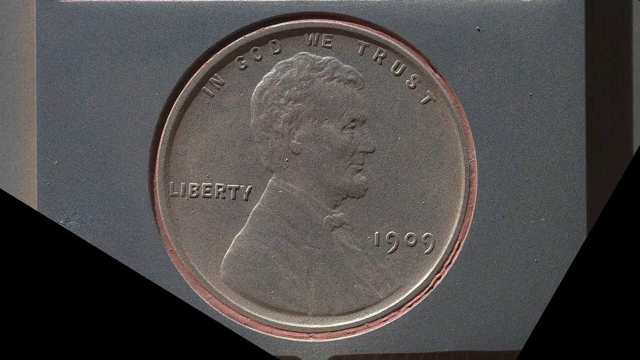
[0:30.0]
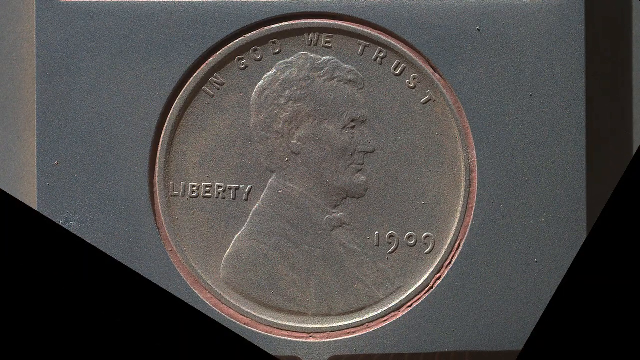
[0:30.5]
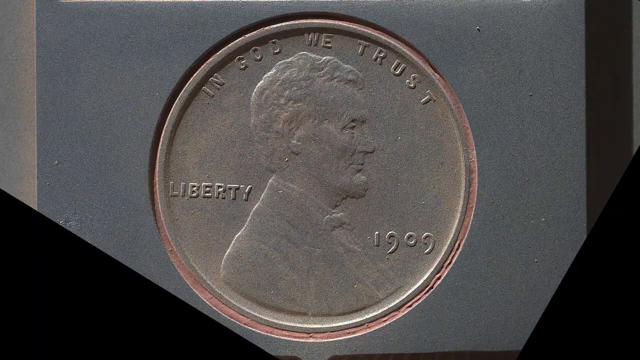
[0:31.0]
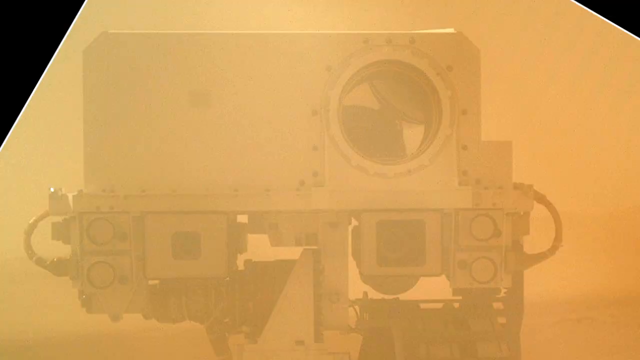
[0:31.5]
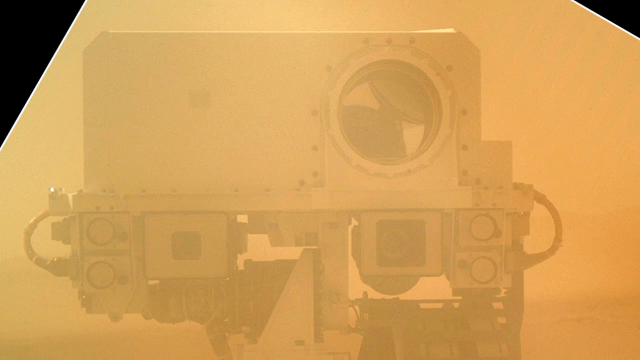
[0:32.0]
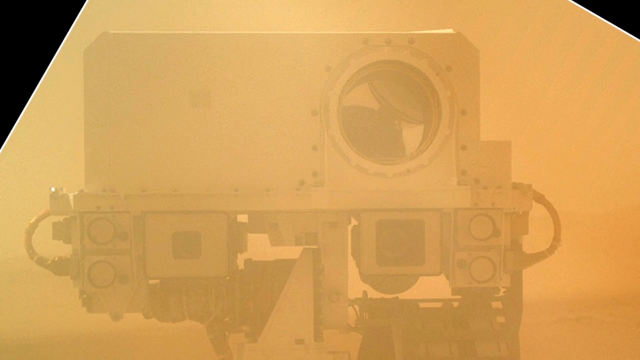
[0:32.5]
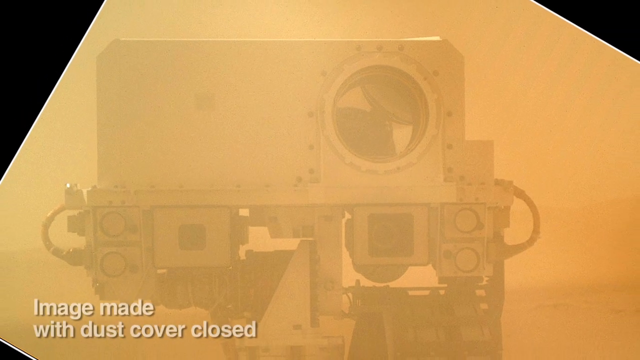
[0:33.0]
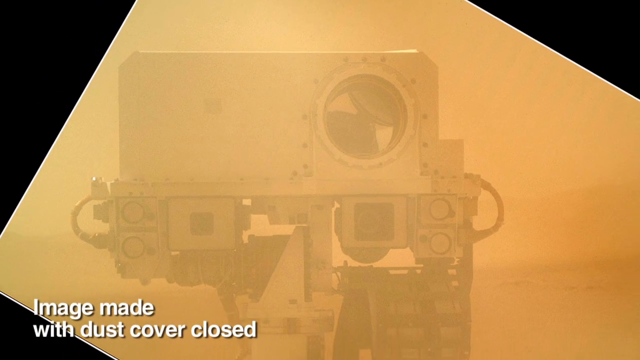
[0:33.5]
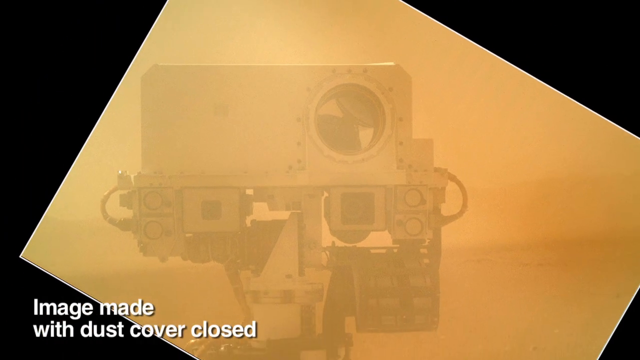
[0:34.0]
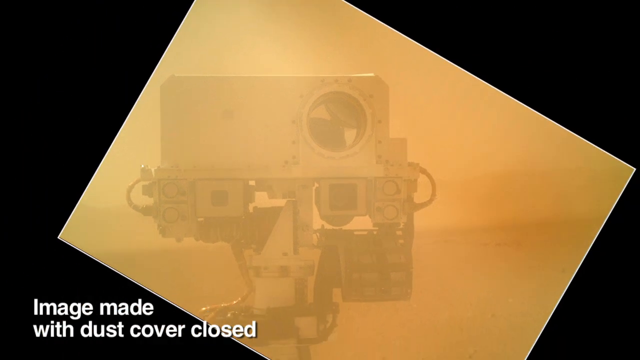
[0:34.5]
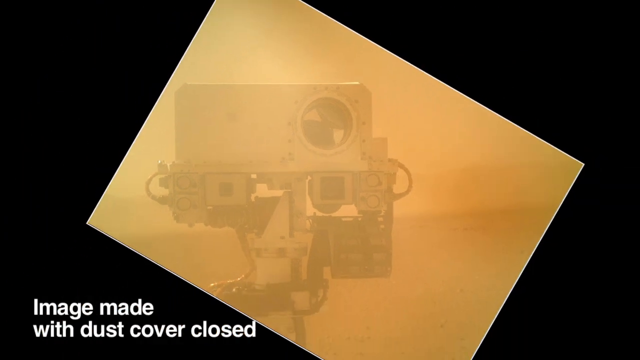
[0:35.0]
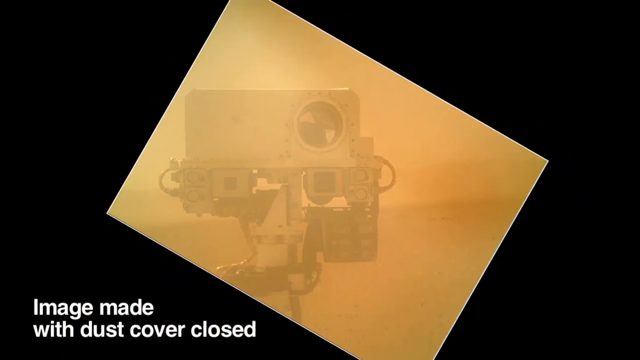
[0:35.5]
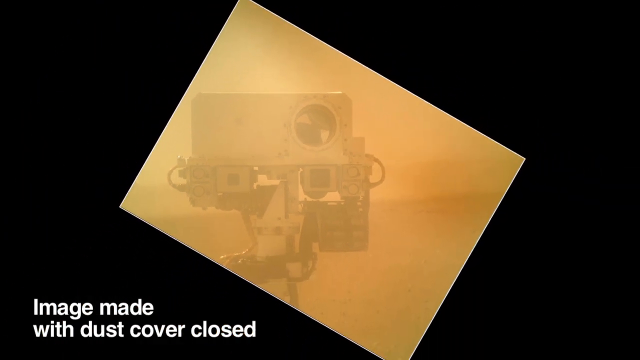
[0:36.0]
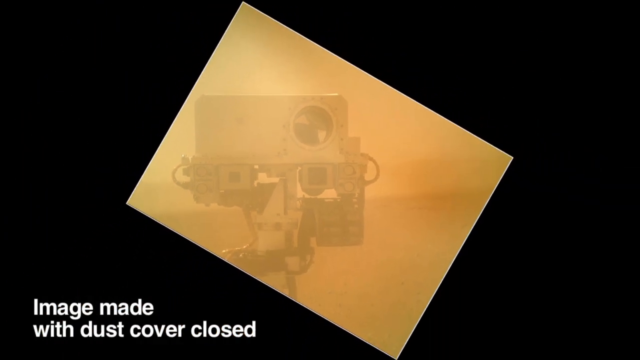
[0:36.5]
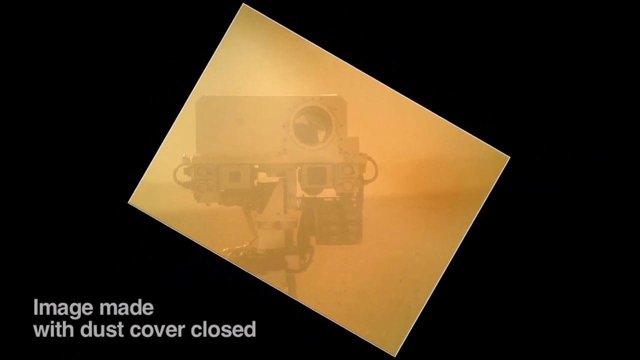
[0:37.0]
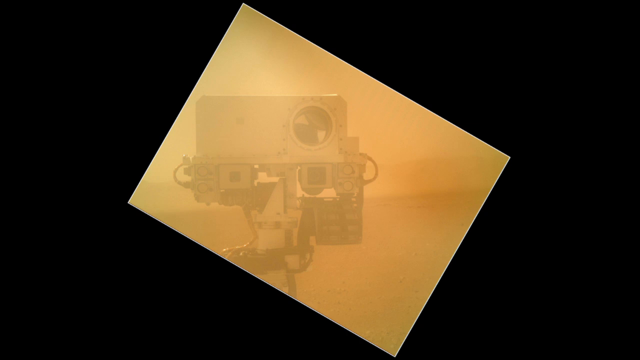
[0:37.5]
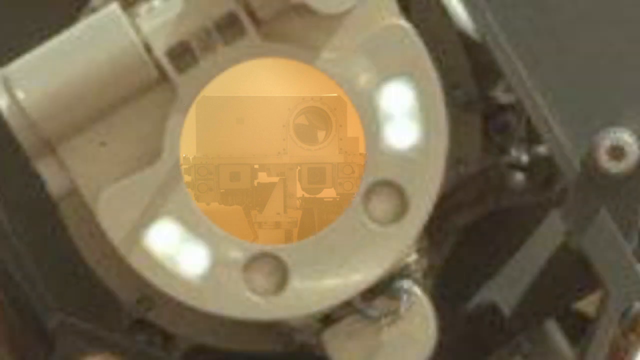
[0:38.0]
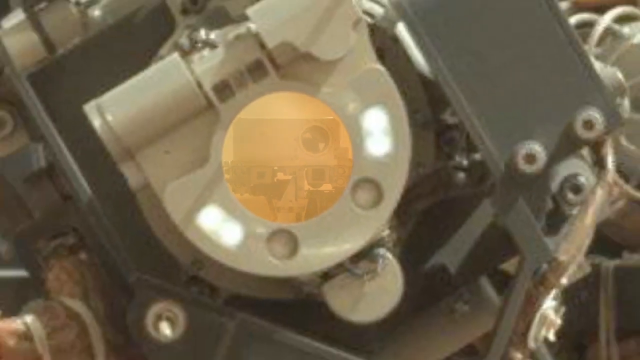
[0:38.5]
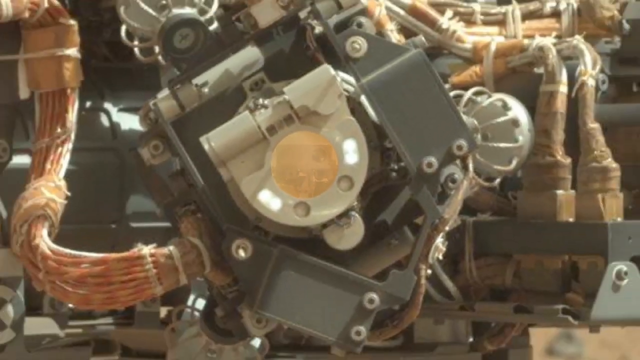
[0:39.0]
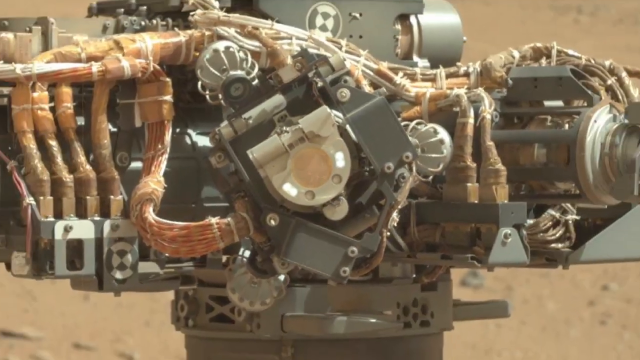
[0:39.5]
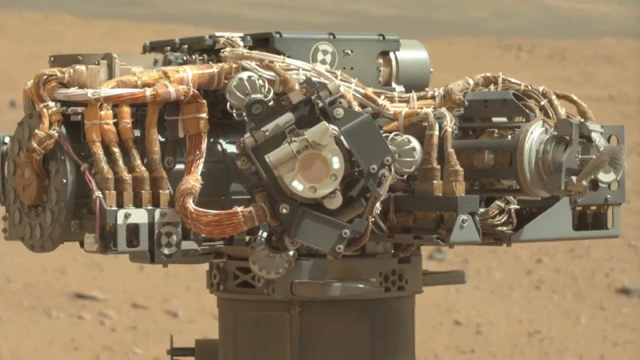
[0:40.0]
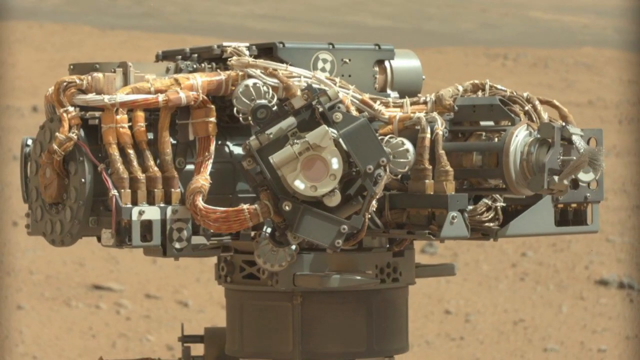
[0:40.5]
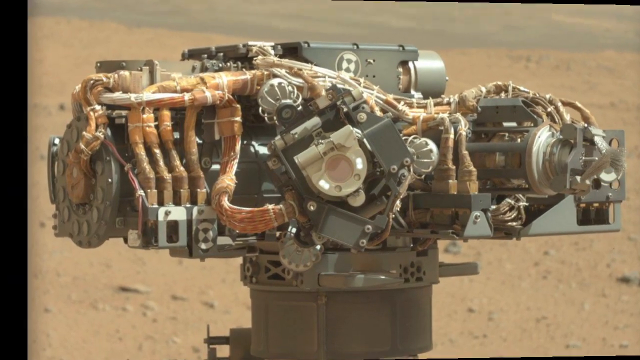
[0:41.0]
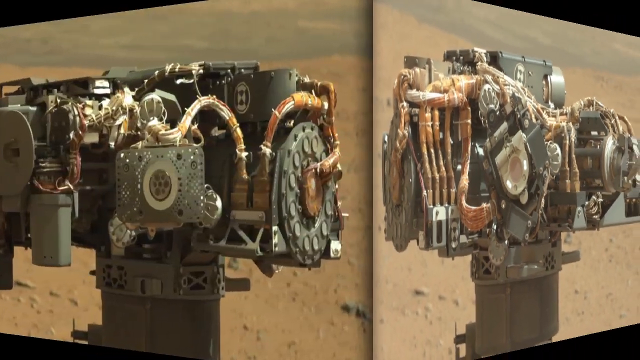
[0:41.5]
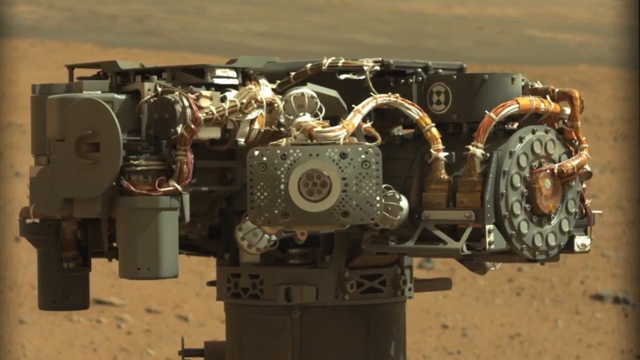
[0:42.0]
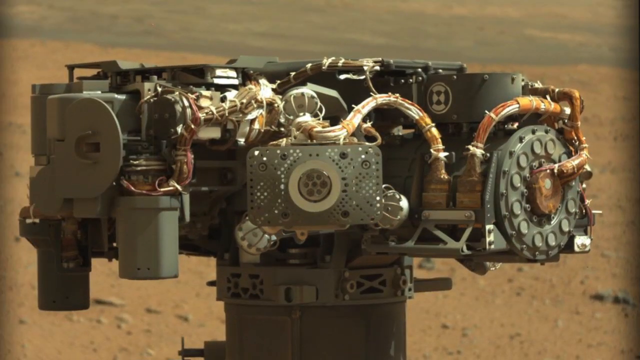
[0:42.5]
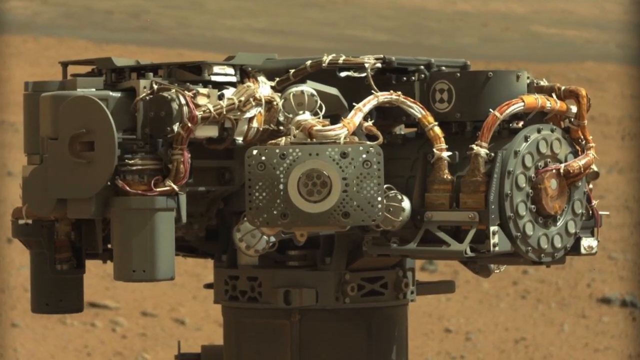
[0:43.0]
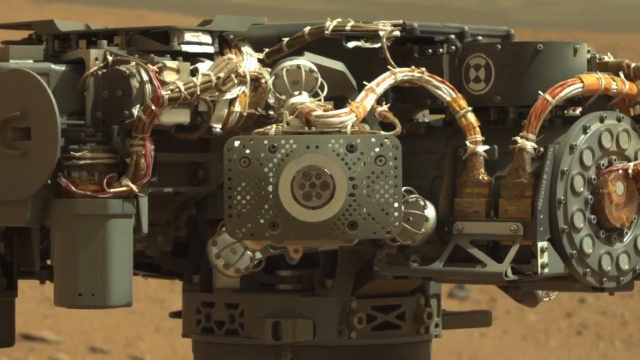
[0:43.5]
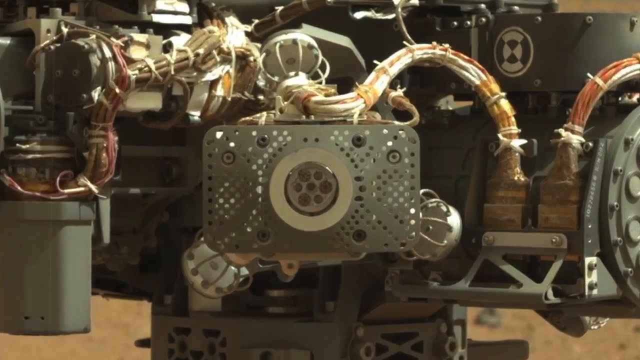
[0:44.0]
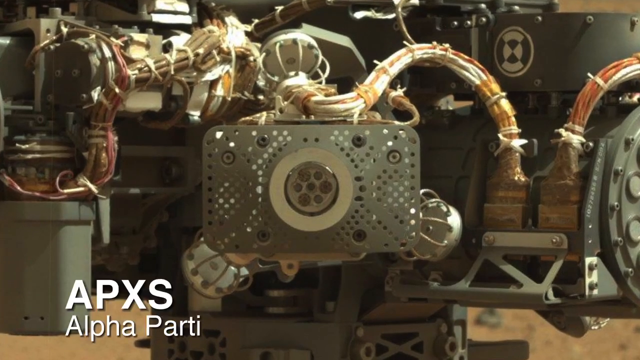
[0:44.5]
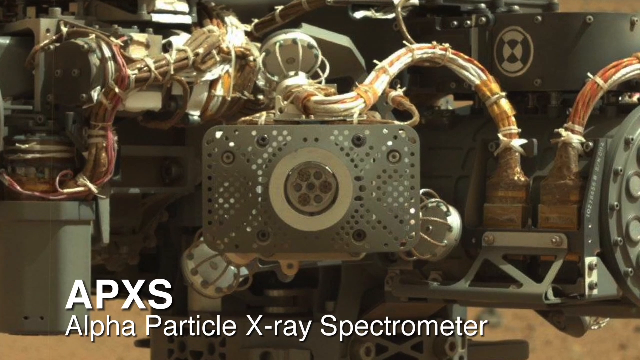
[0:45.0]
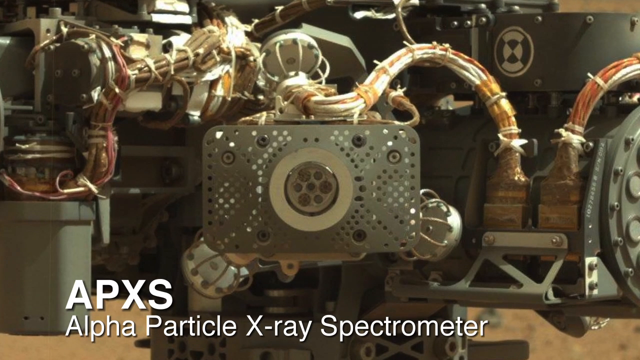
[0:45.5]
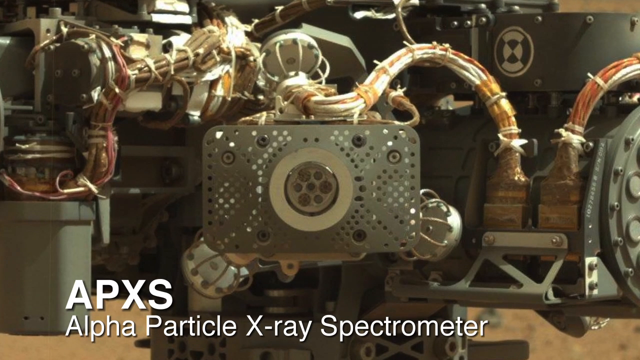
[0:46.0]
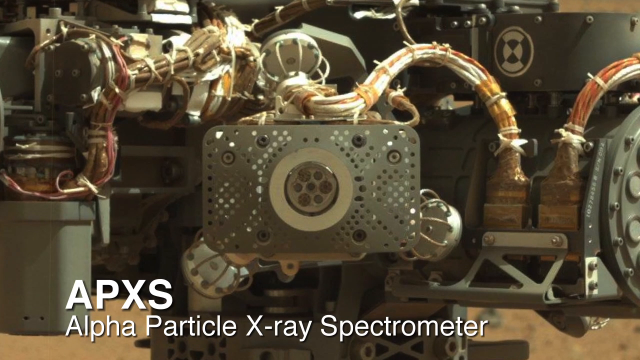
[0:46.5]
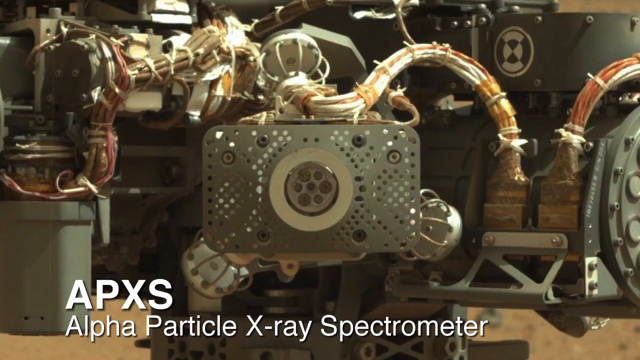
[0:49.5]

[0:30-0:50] A close-up shows the 1909 Lincoln head penny installed on the outside of the rover. The view changes to a yellow filter over a picture of part of the rover's upper mechanism, with the caption below reading "image made with dust cover closed." The image zooms out, and the next image shows that lens as it sits in the larger mechanism of the rover. On the left-hand side are four orange tubes going up, and many wires and tubes are strung across the top of the mechanism, running over to lenses on the other side. The camera switches around to text reading "APXS, Alpha Particle X-ray Spectrometer" over a close-up of the lens the rover uses to take pictures.